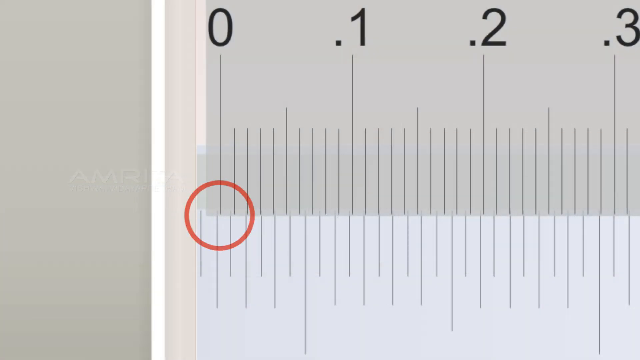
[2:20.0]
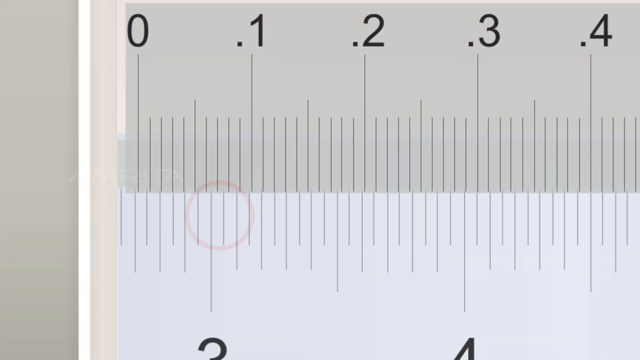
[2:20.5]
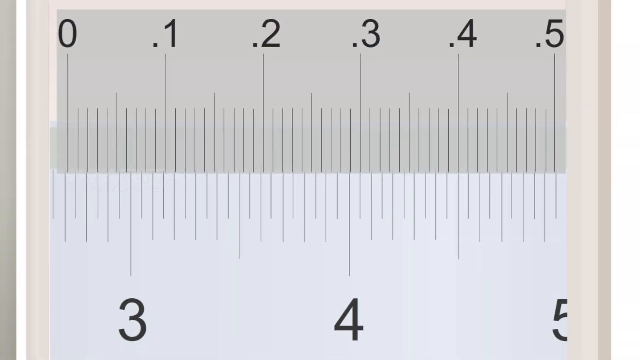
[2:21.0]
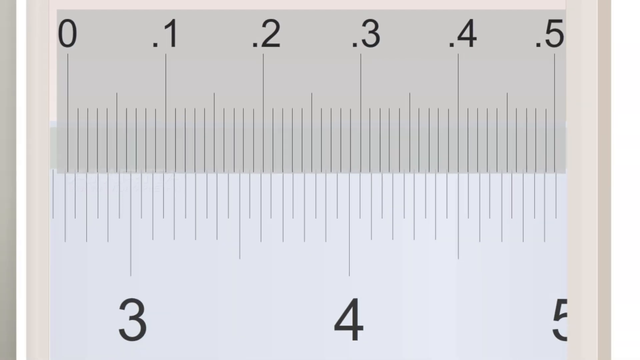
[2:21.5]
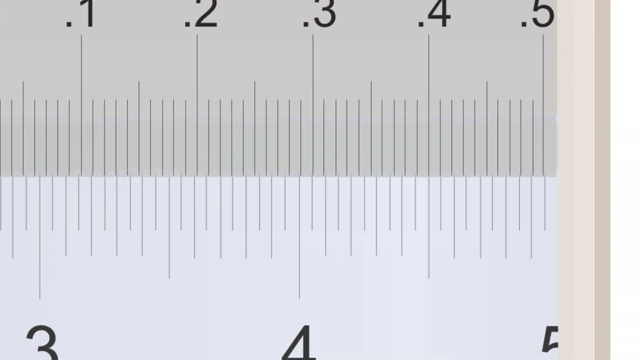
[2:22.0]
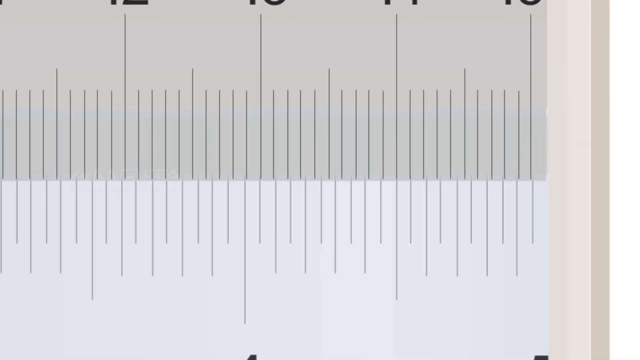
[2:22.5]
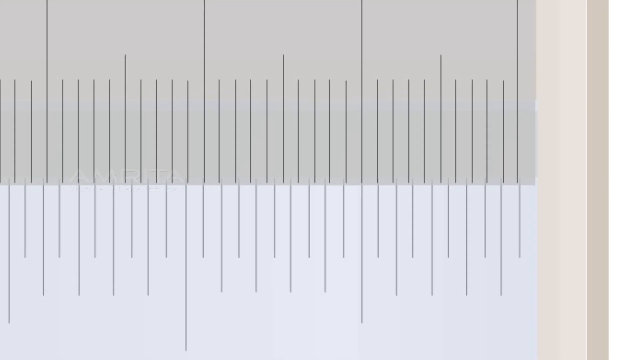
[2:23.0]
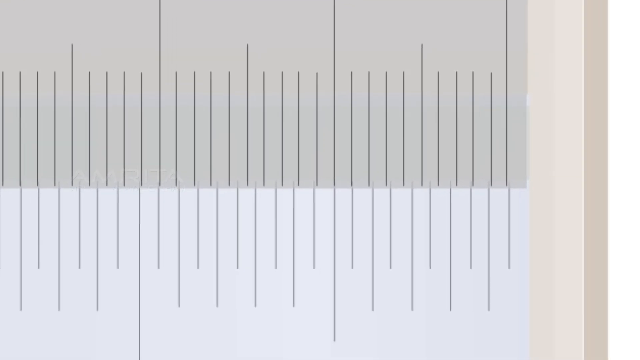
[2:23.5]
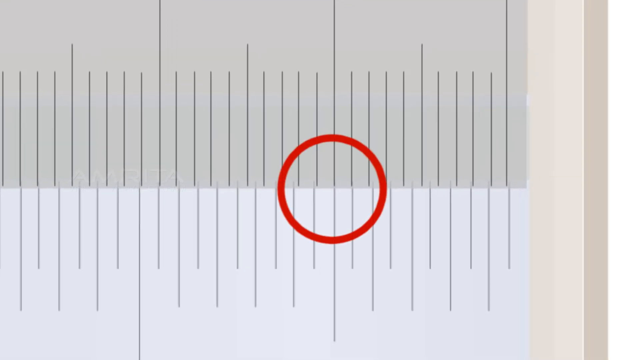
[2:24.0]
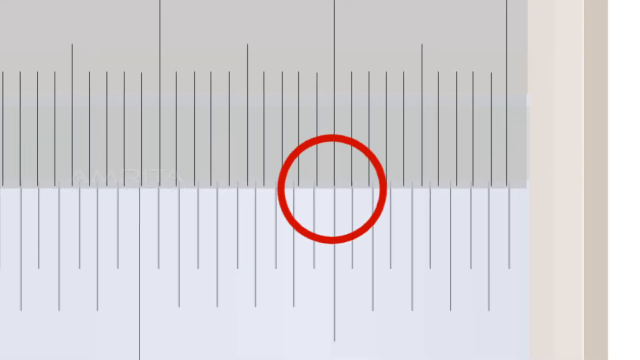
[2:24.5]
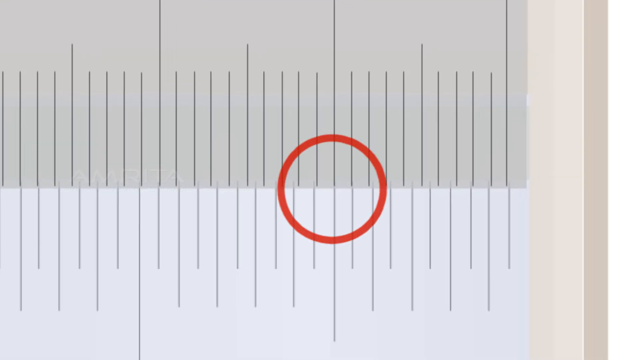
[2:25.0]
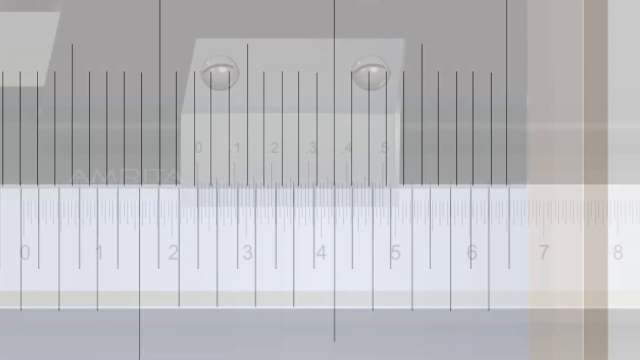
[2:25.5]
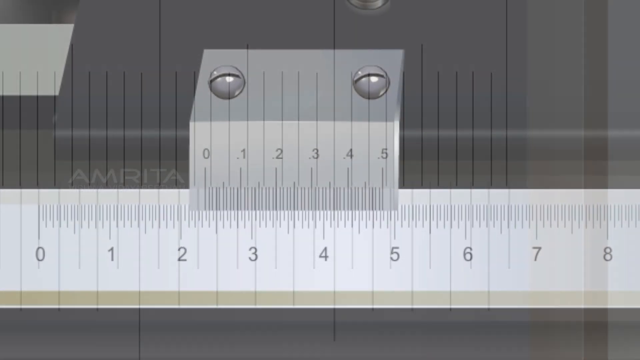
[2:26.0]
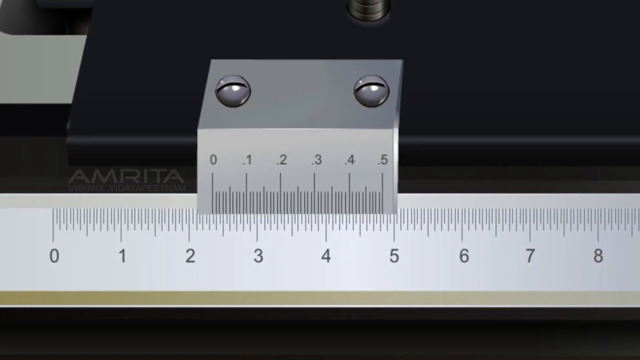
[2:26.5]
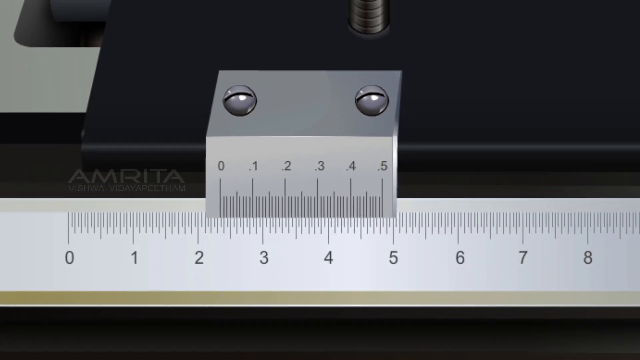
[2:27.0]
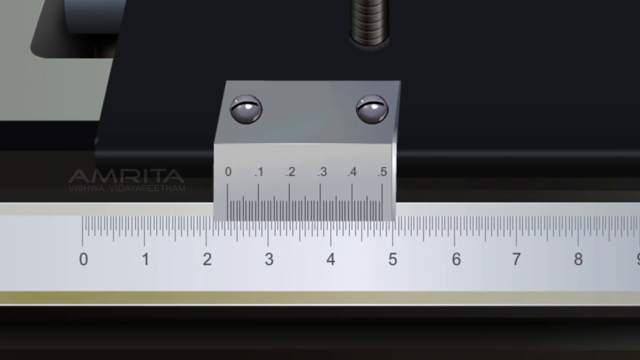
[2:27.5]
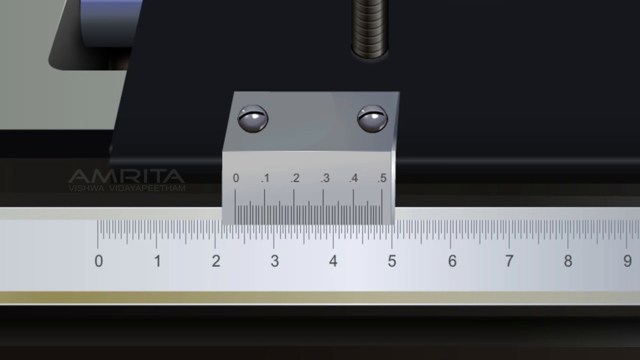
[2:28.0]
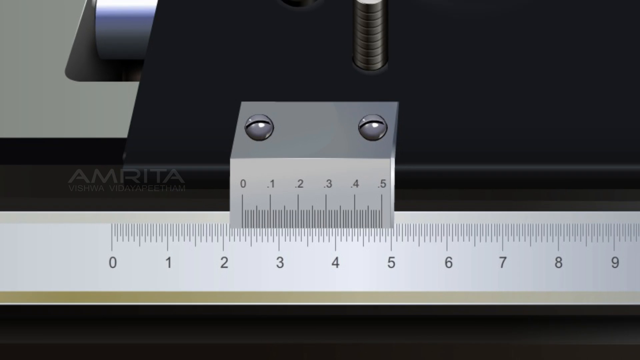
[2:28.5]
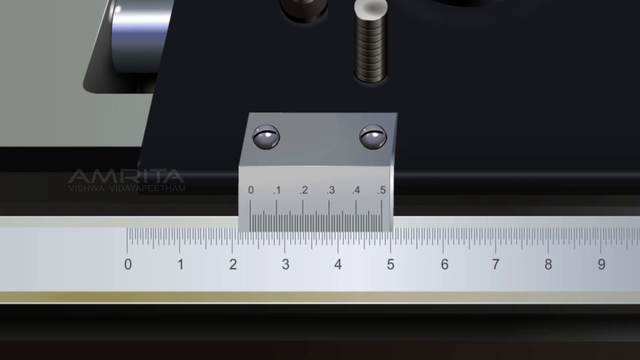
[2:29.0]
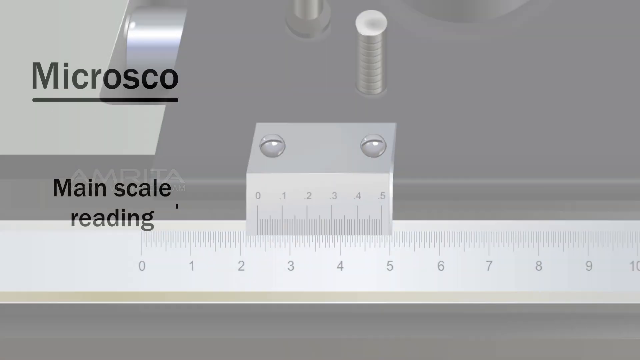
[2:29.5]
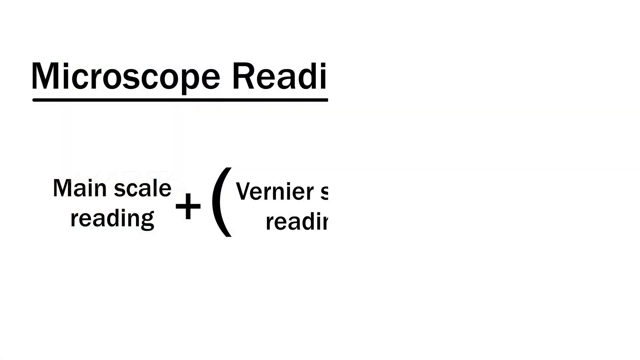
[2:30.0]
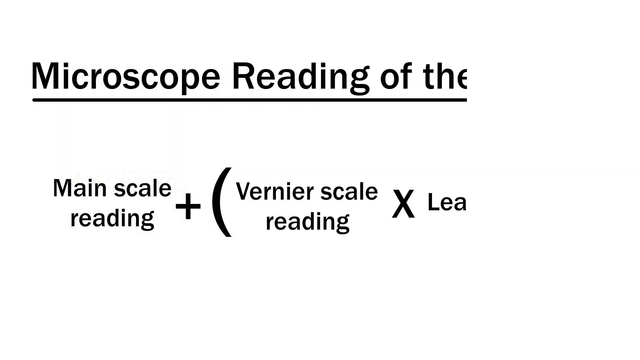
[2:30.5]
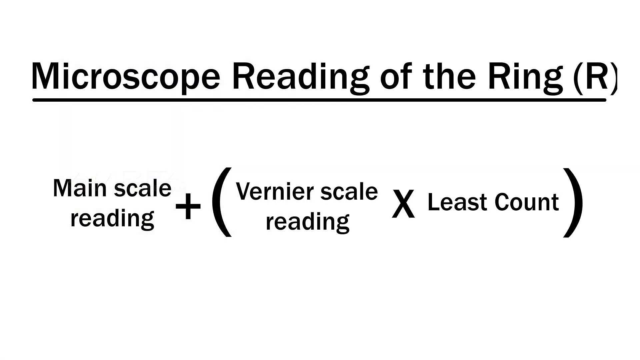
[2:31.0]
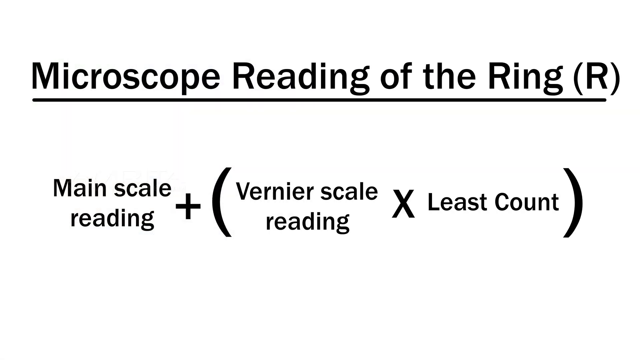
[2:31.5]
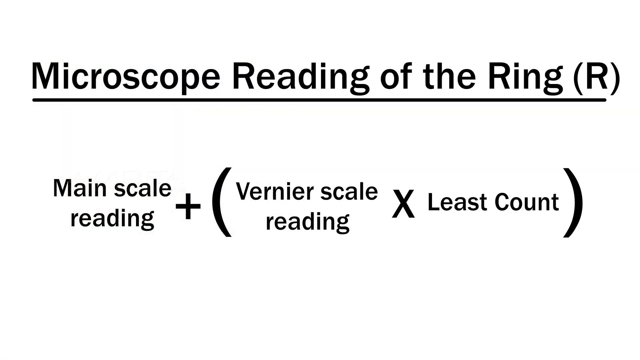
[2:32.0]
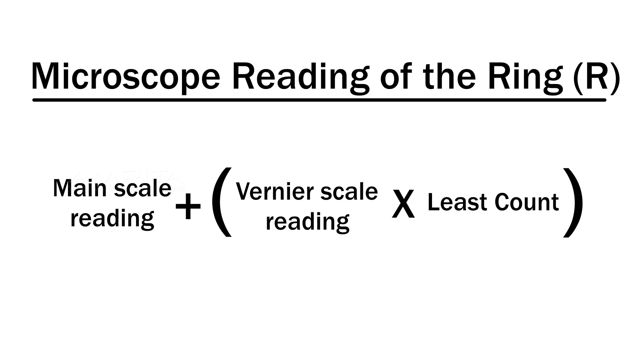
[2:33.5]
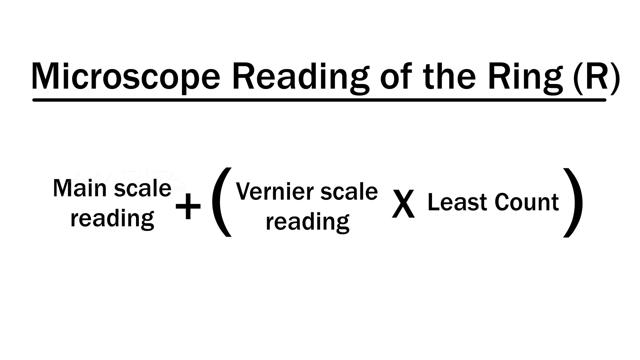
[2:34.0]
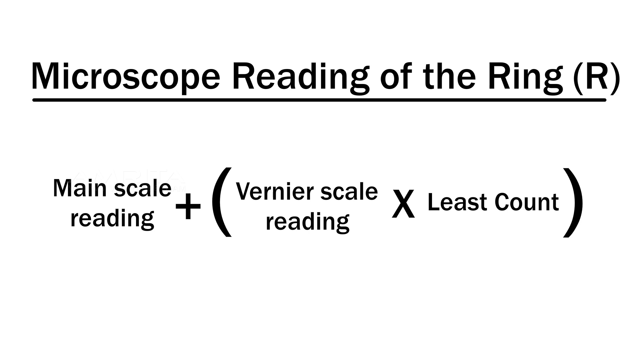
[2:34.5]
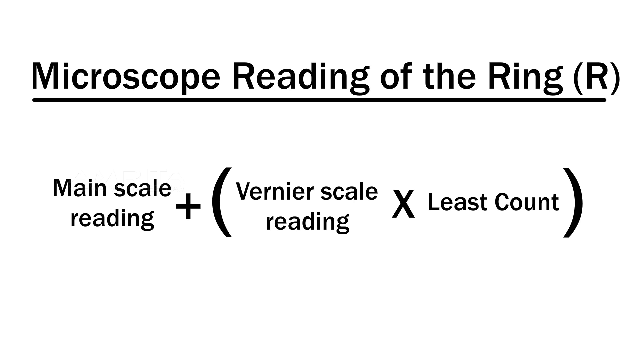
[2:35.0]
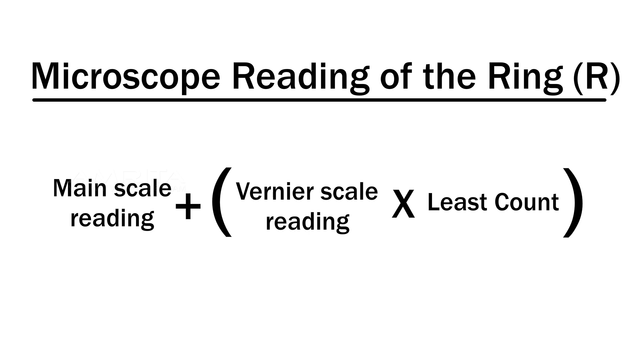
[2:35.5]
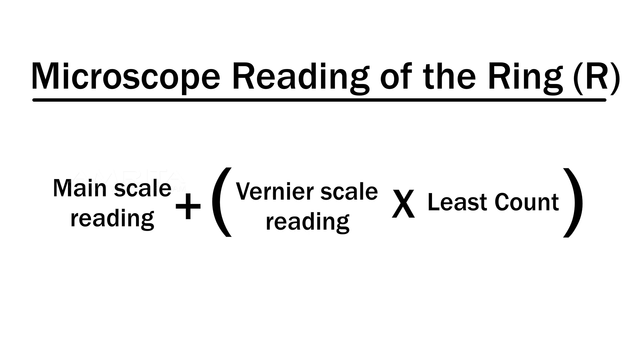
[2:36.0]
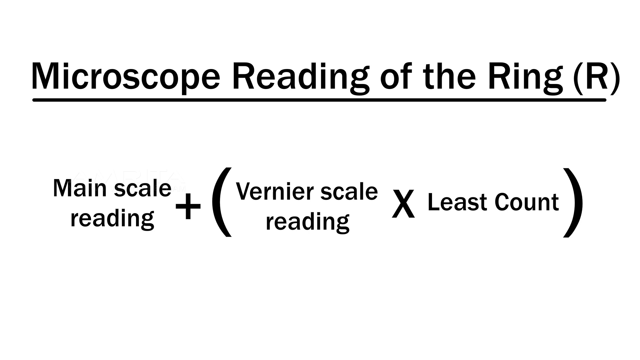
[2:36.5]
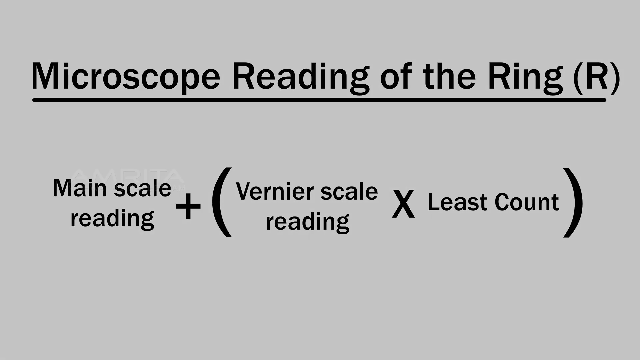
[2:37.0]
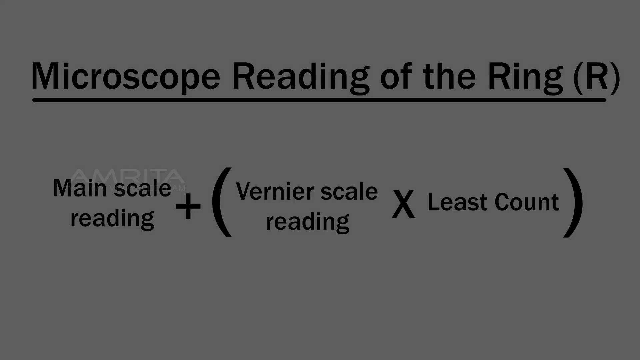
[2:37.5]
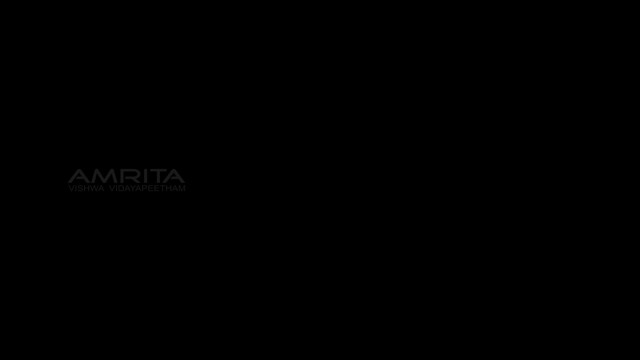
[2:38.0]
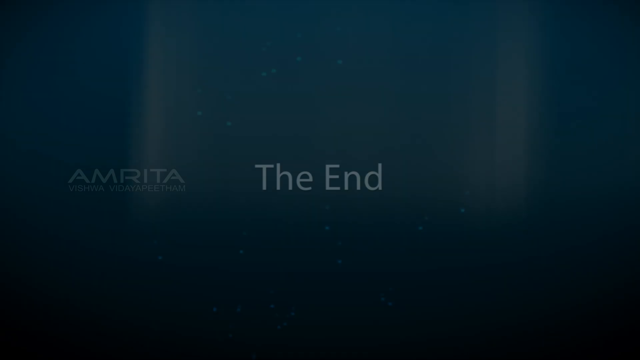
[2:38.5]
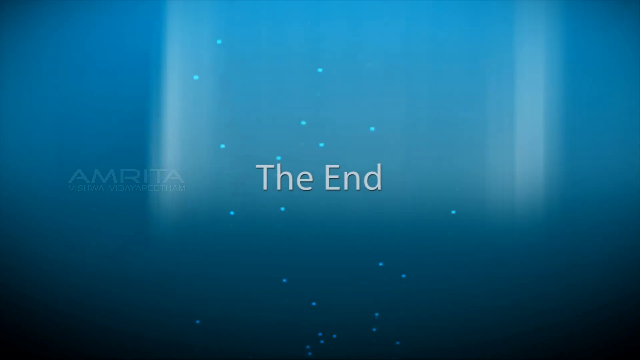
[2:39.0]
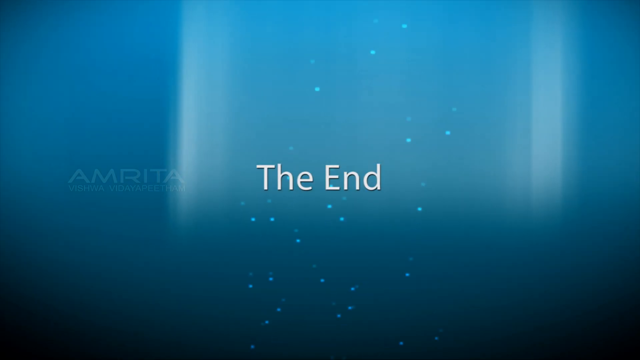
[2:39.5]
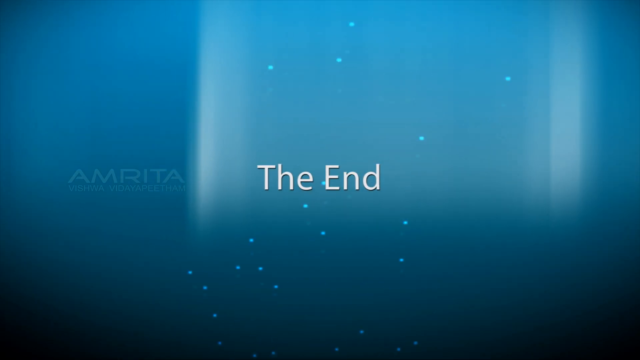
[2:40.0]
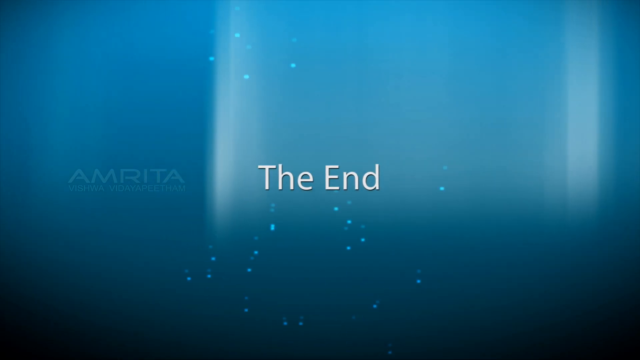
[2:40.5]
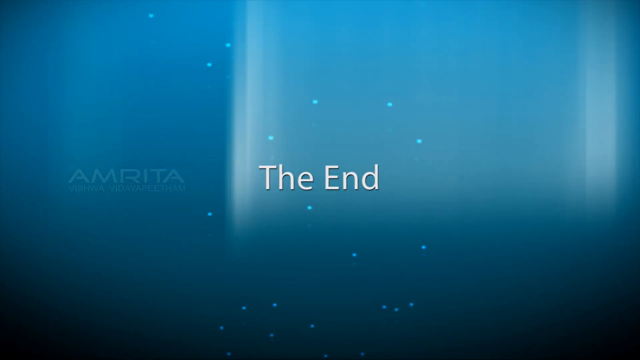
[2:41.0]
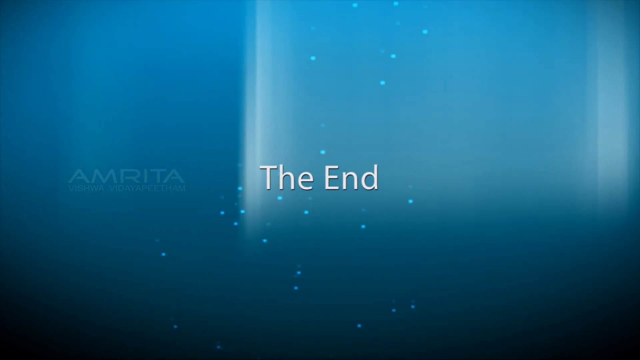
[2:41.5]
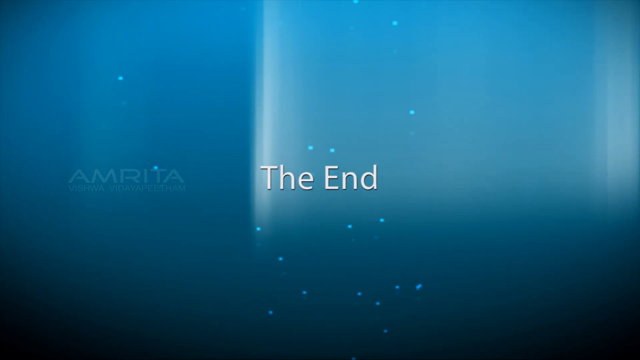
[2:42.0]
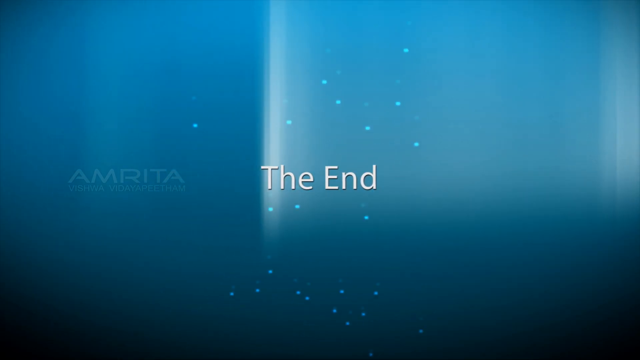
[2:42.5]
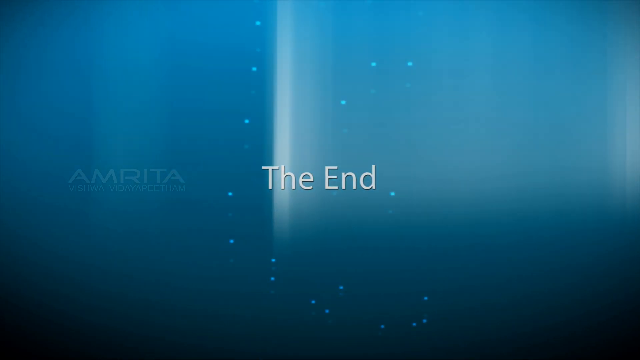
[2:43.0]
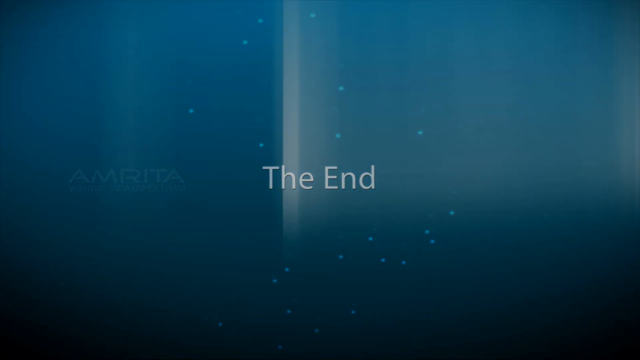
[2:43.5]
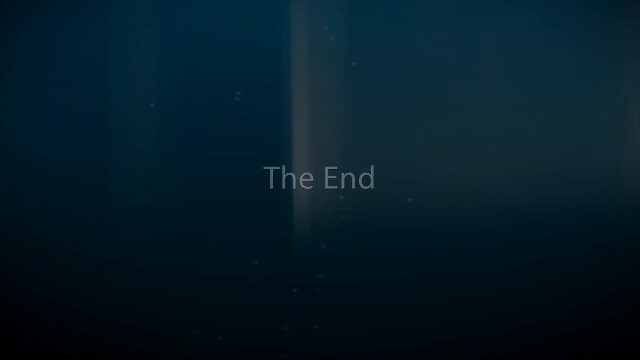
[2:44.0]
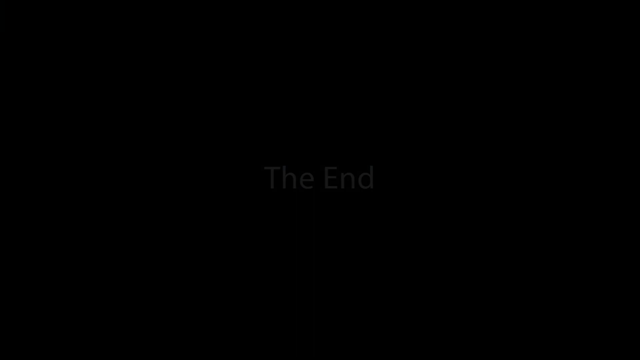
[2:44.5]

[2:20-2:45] A silver-white ruler is shown. The camera starts on one side of it, pans out, and then zooms in closely, after which the ruler is circled in red. That disappears, and an overview shows the rectangular ruler with the numbers 0 to 8 and a smaller ruler on top of it marked 0 to 5, against a black backdrop; it looks like it might be computer-generated. Next is a white background with black text reading "microscope reading of the ring" and what looks like a formula written beneath it. This lingers, fades to black, and is followed by a blue backdrop with rising white bubbles and "the end" in white font.